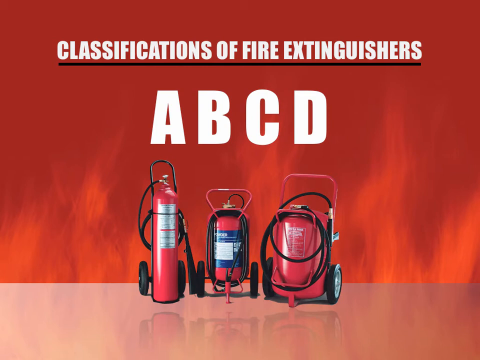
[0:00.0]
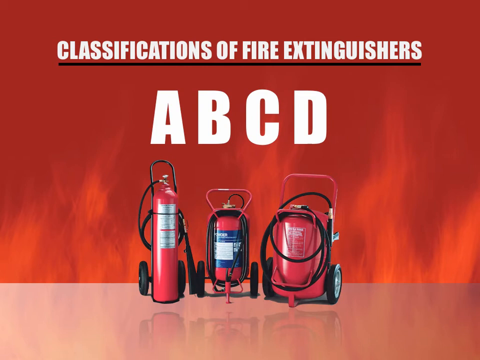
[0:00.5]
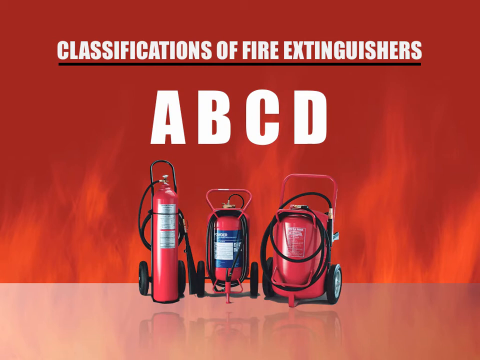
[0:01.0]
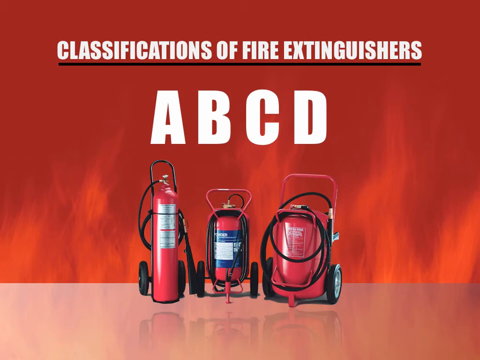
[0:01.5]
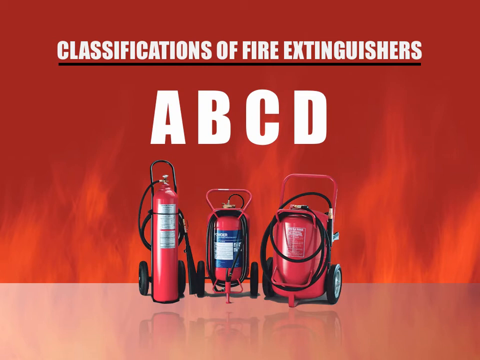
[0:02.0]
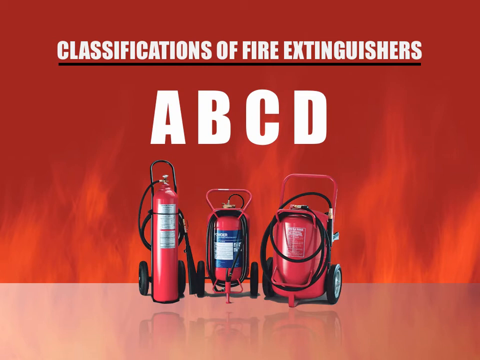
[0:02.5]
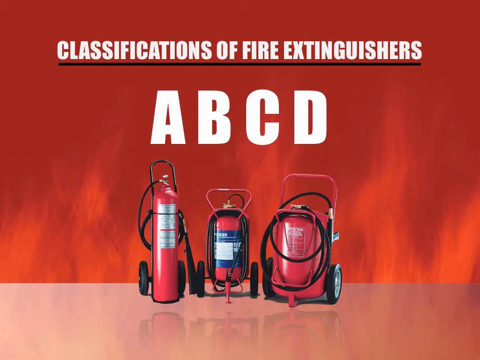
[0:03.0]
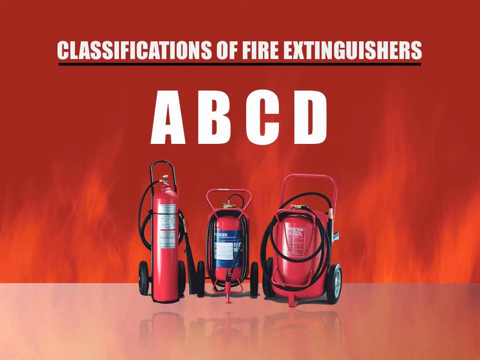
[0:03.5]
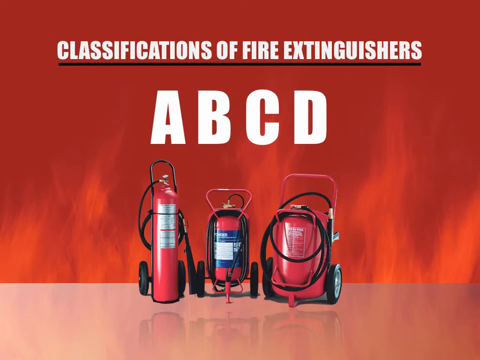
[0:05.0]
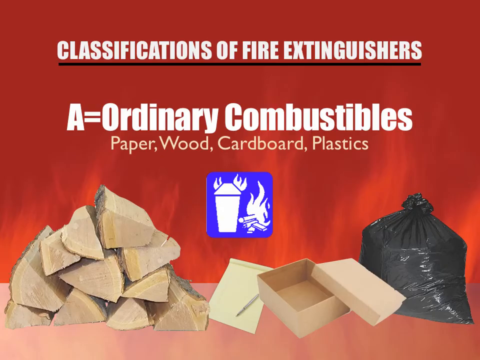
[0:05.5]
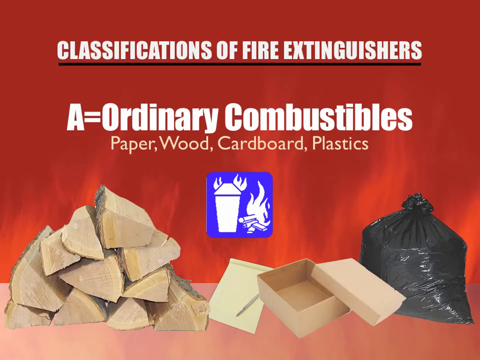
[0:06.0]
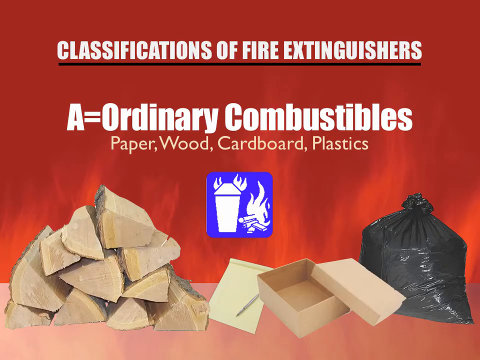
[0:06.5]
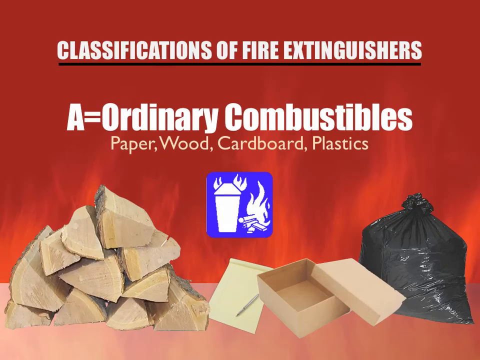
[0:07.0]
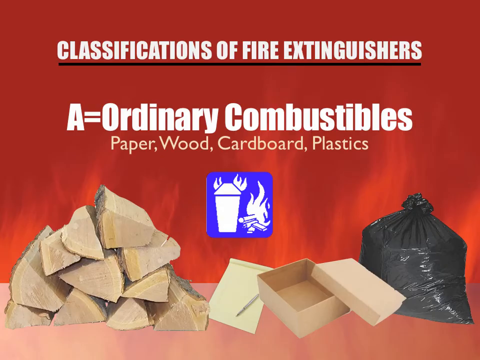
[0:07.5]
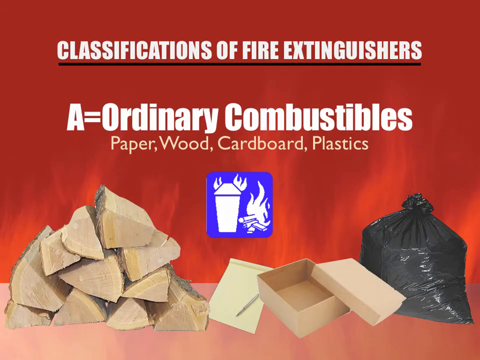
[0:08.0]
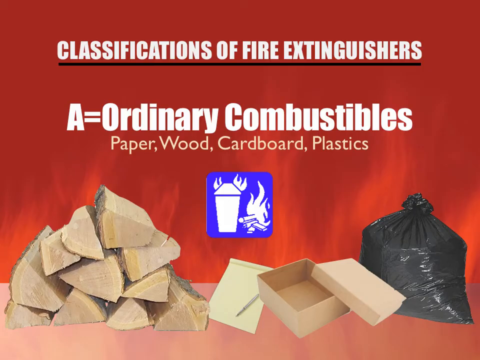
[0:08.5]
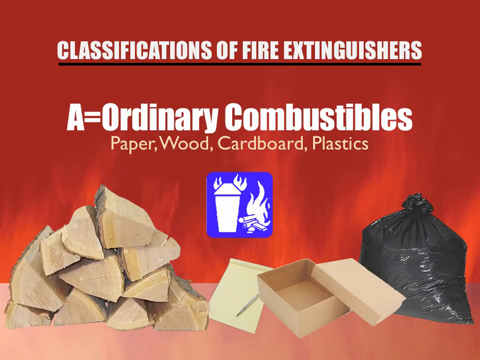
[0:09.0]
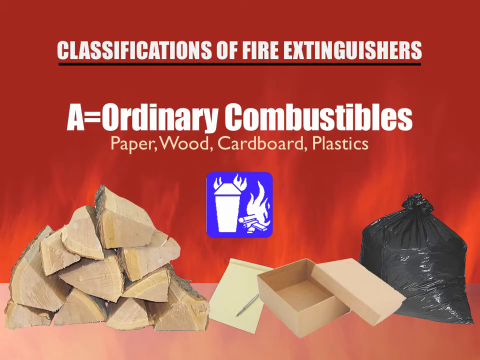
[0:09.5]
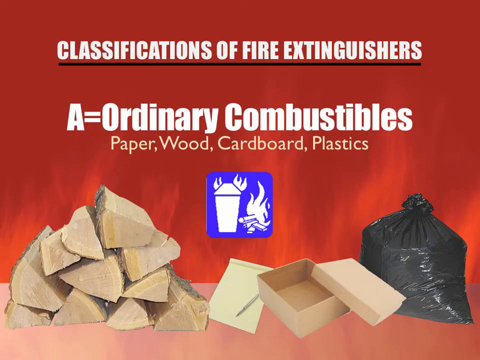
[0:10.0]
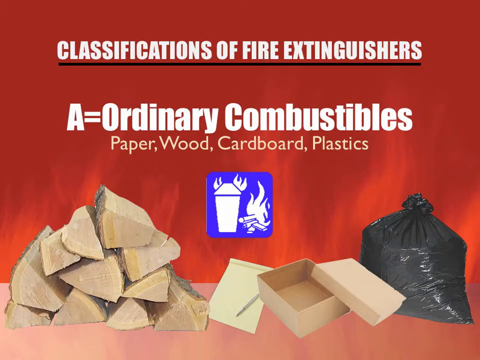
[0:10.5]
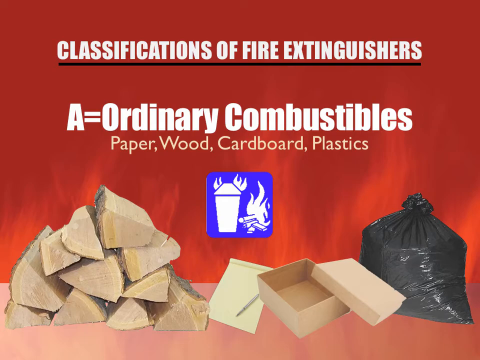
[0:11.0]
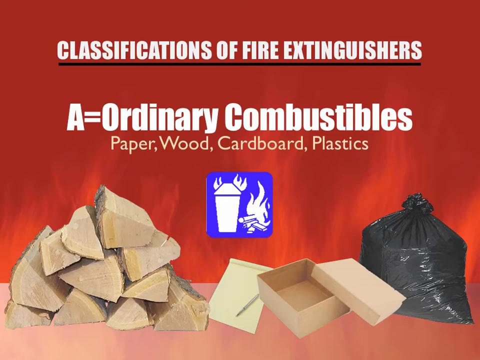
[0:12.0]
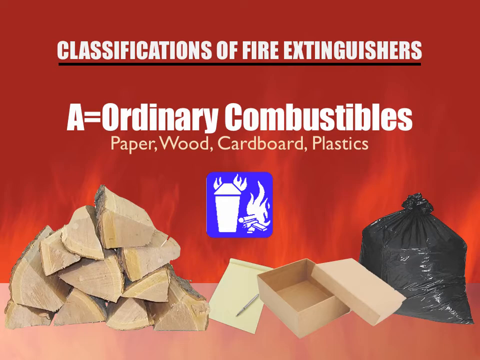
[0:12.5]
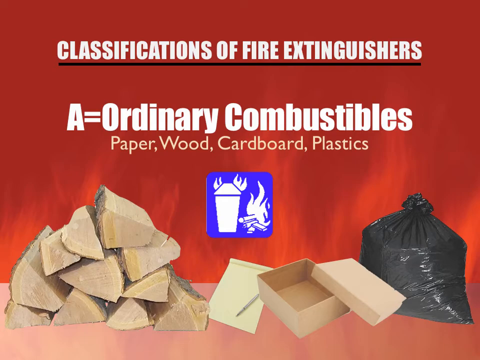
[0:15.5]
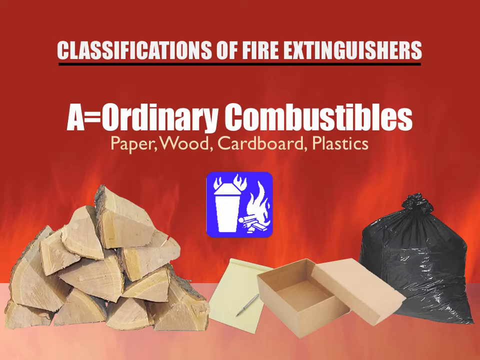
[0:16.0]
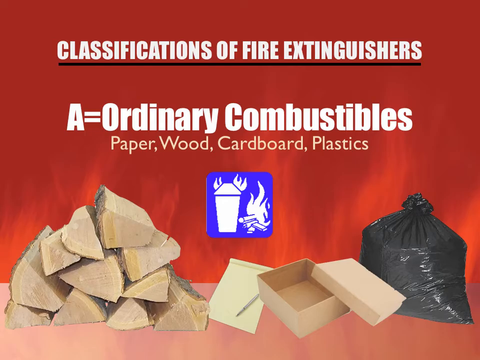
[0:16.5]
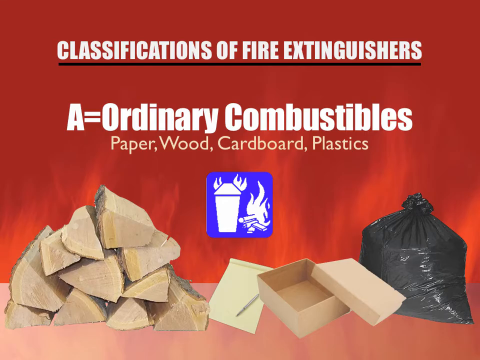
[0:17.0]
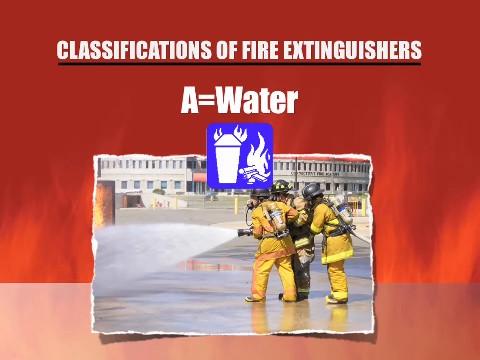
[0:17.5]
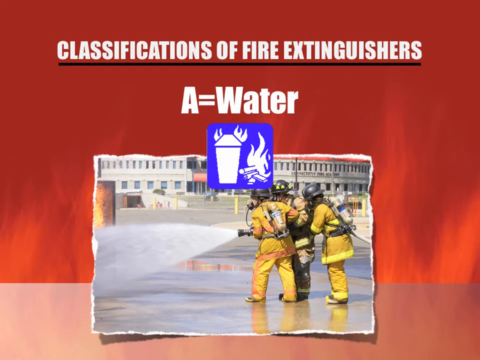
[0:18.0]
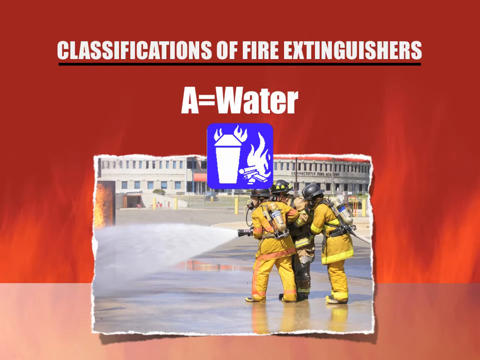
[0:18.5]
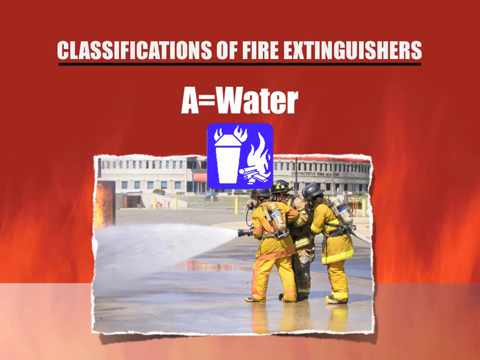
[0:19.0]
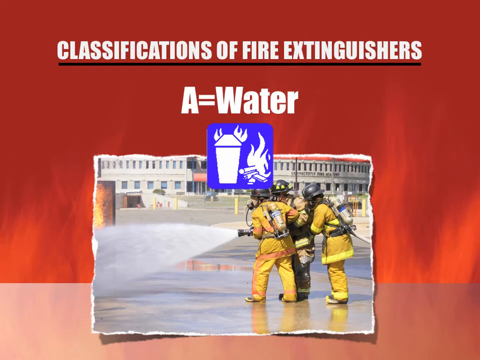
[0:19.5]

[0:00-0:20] The headline reads "Classification of fire extinguisher." Different types of fire extinguisher are shown, along with a lot of other things. A category A, ordinary combustibles, lists paper, wood, cardboards and plastic as things that can cause fire.